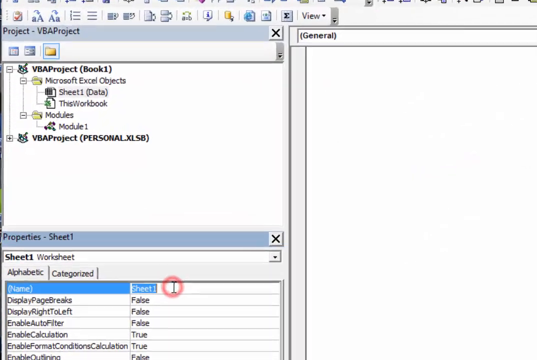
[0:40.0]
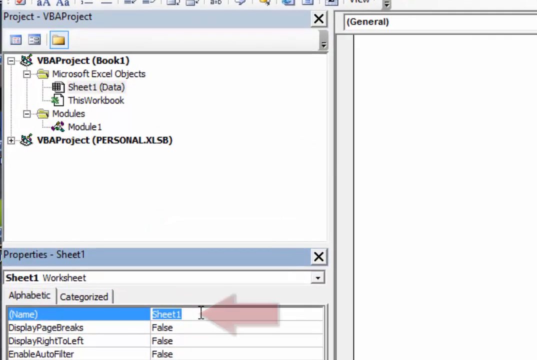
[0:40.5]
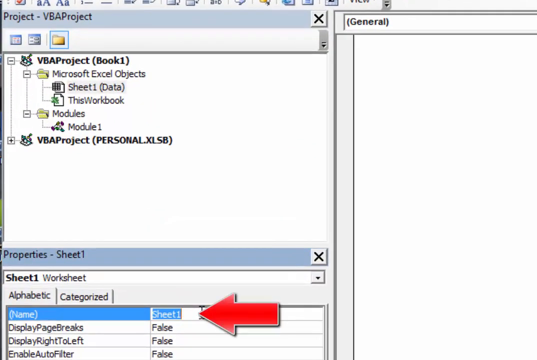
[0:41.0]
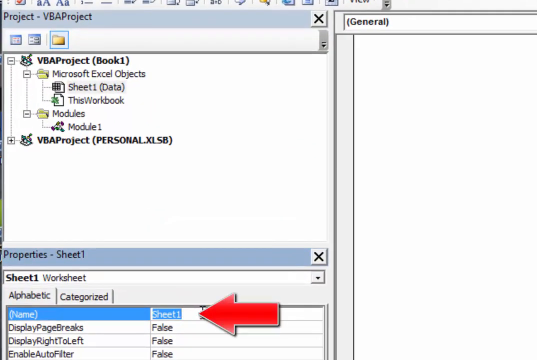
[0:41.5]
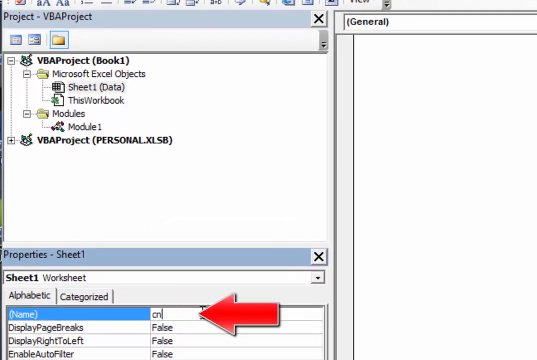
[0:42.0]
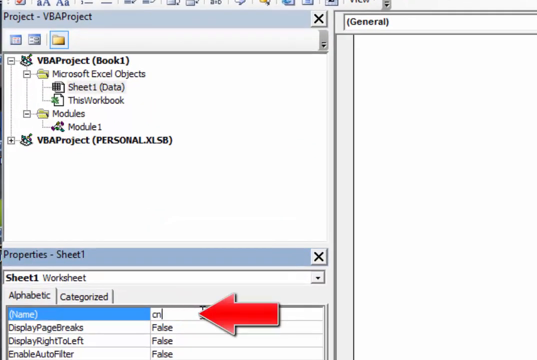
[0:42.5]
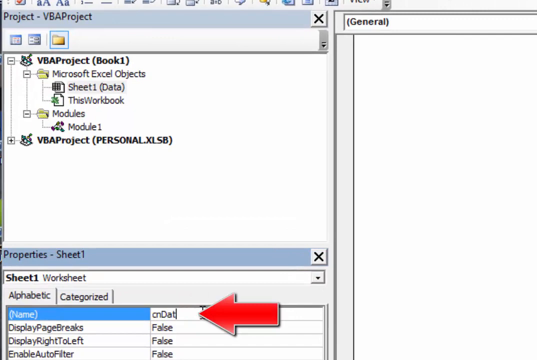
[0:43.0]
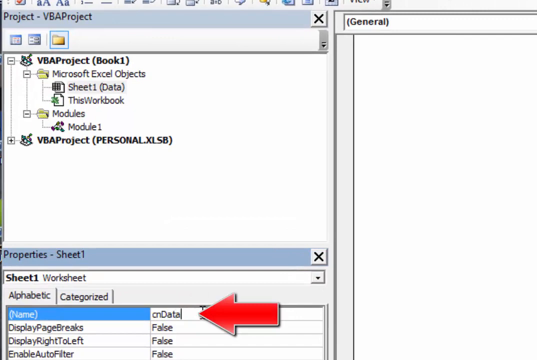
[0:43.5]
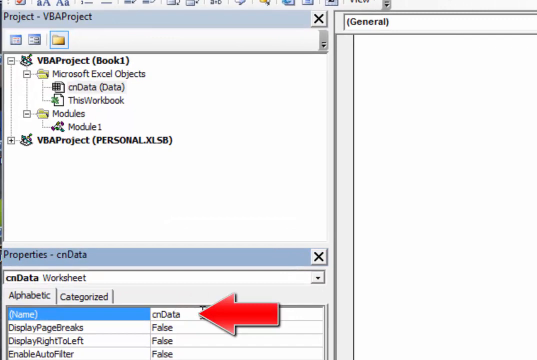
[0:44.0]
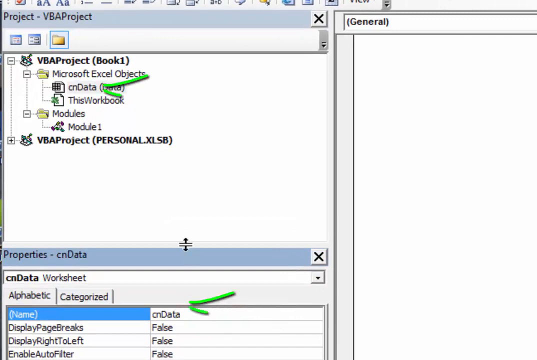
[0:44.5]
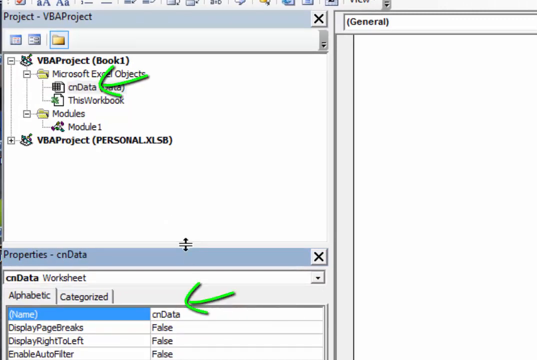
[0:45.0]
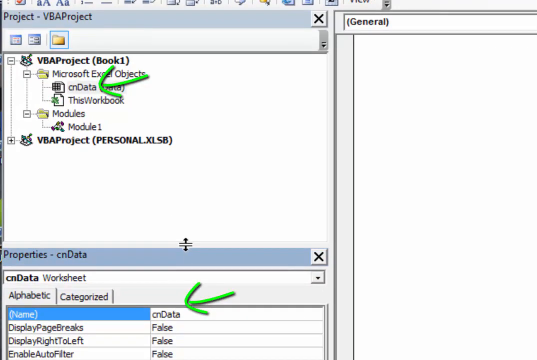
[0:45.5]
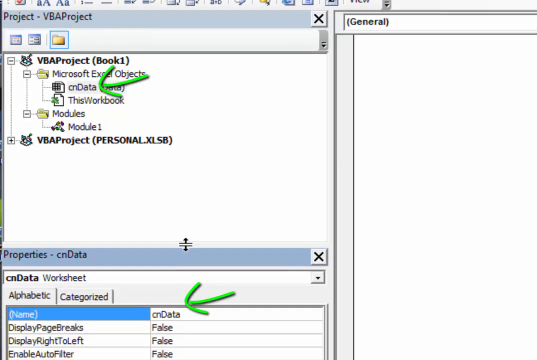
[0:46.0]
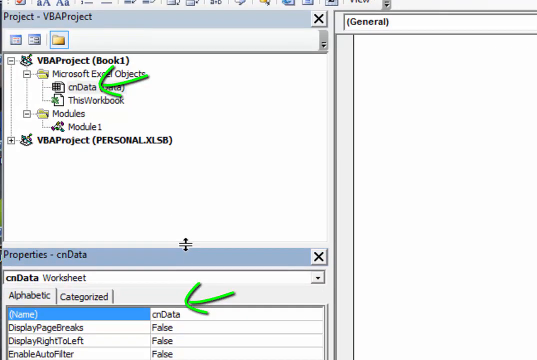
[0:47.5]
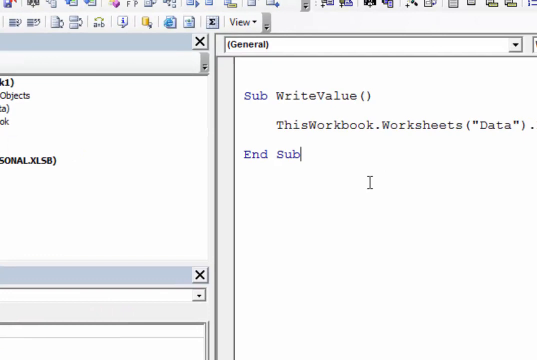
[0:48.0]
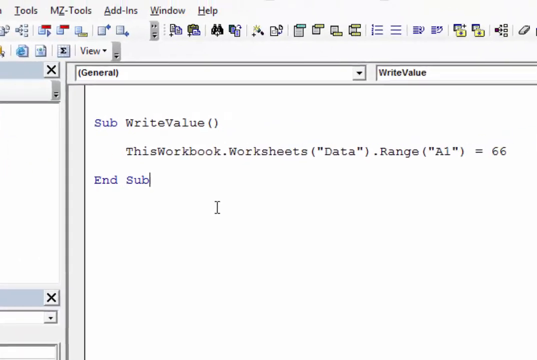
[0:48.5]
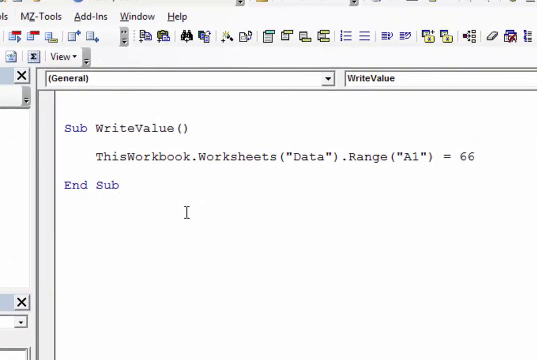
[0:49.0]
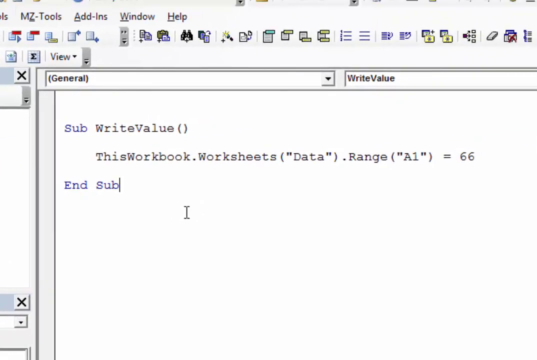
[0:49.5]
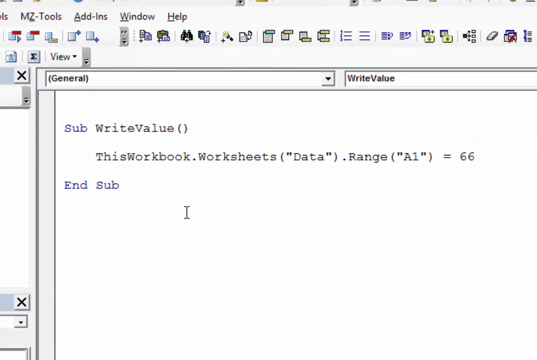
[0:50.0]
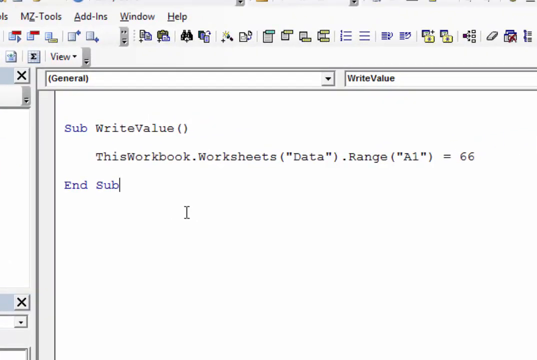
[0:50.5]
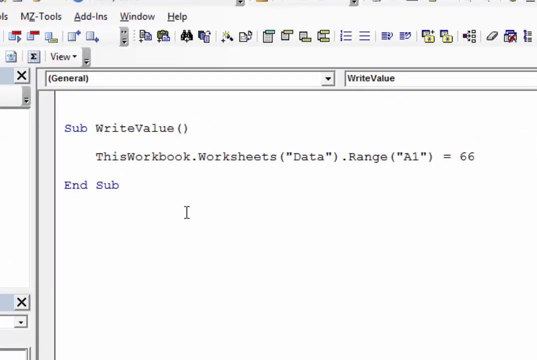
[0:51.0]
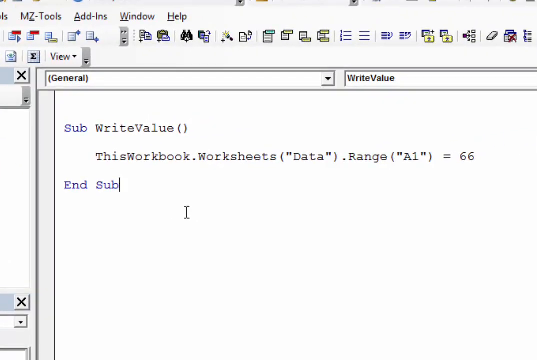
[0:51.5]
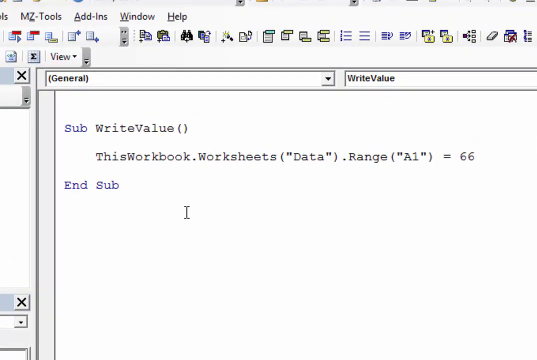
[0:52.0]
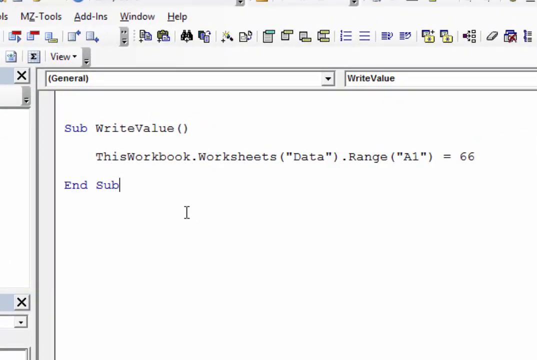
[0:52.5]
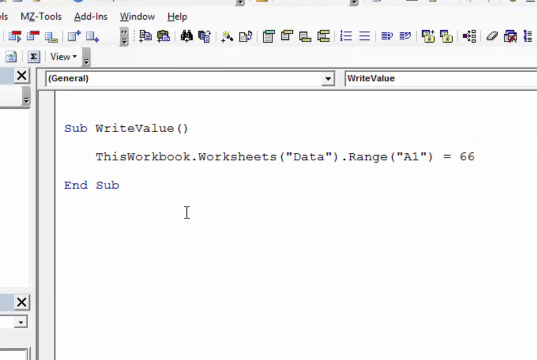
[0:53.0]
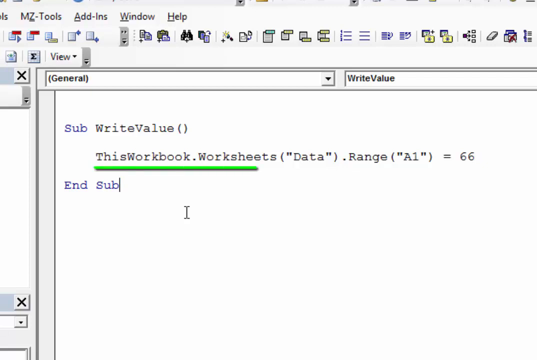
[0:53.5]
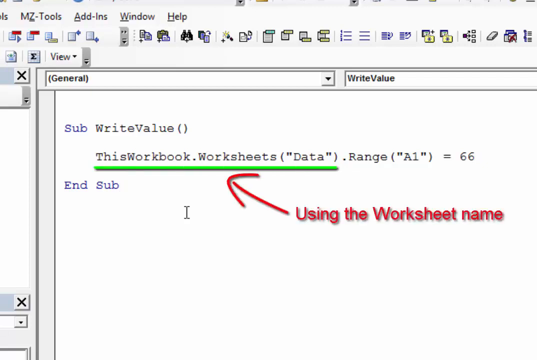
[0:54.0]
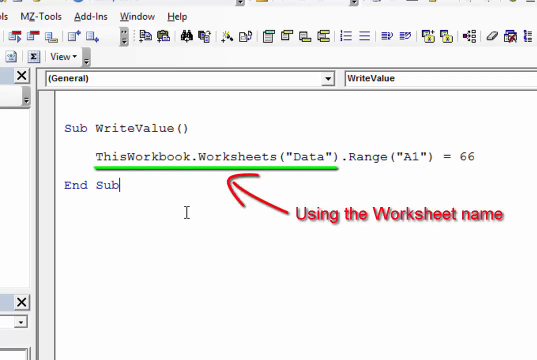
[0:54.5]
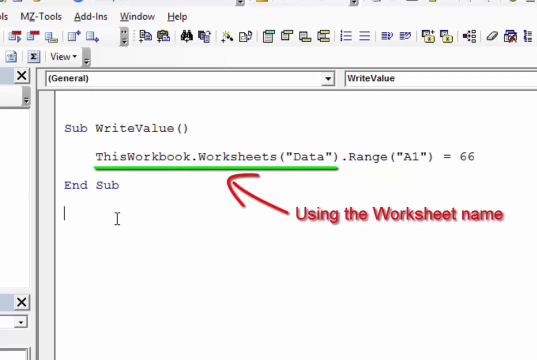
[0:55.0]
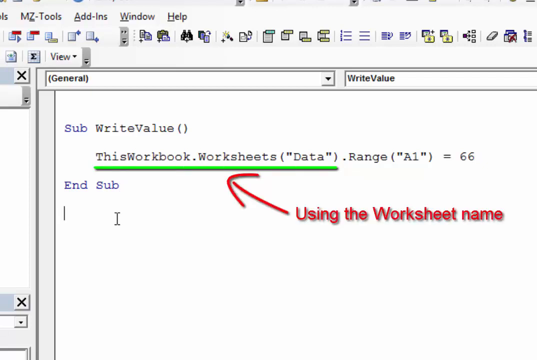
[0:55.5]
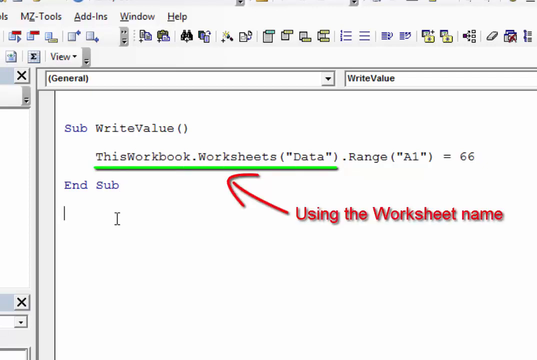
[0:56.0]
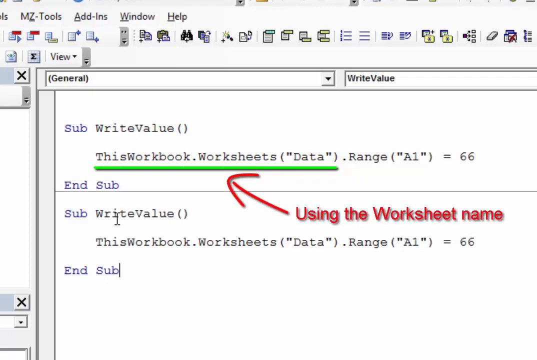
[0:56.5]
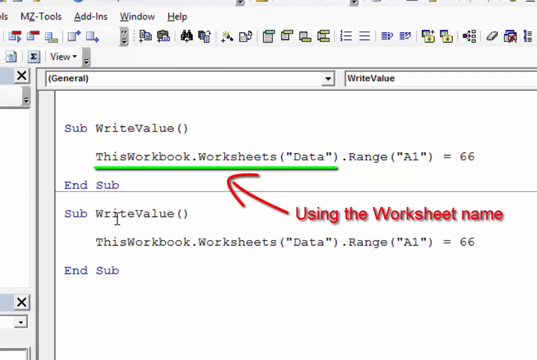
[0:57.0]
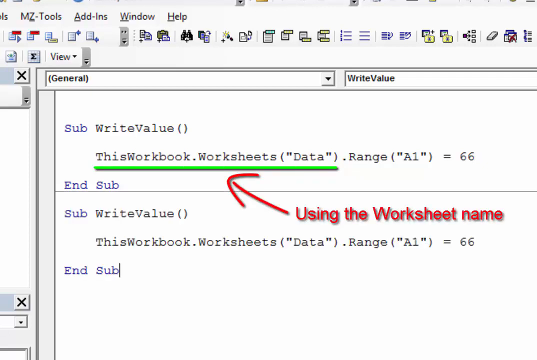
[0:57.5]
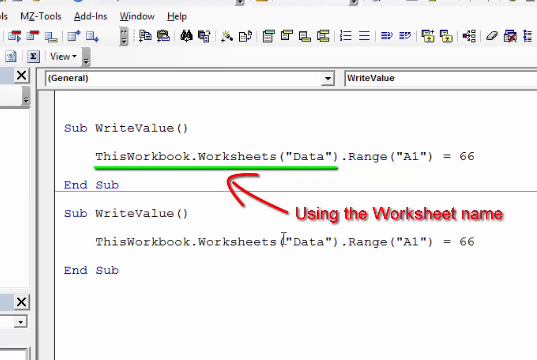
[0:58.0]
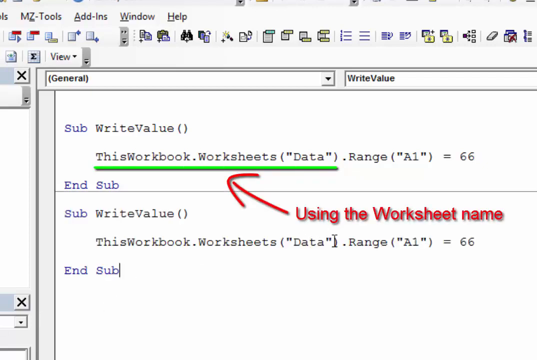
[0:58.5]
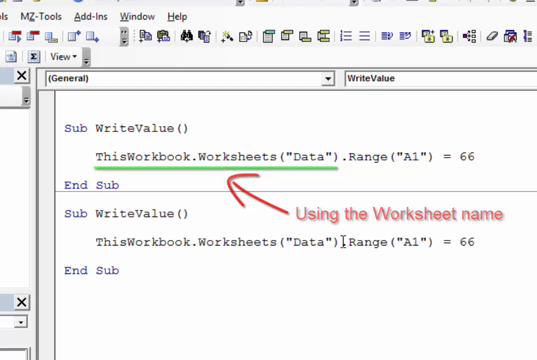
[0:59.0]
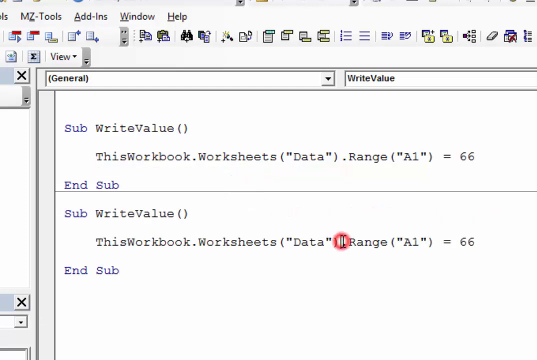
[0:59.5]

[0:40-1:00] The sheet formerly named Sheet1 now appears as "data." Code is shown beginning with a sub followed by open and close brackets, then a line referring to the worksheets collection with "data" in brackets and apostrophes, followed by ".range" and A1 in brackets, setting A1 equal to 66, and ending with a sub line.